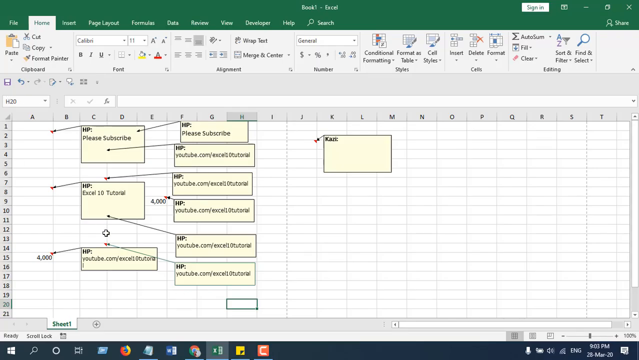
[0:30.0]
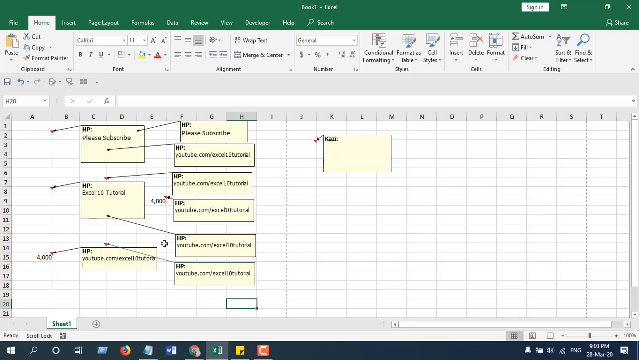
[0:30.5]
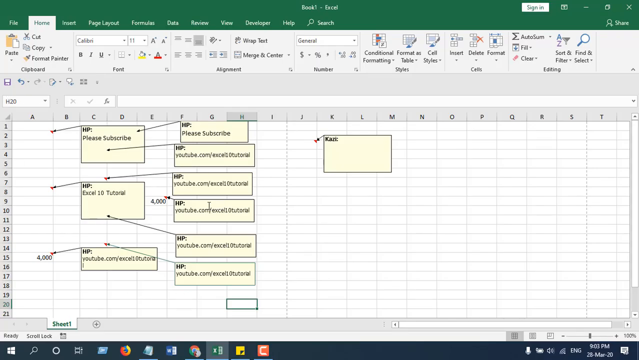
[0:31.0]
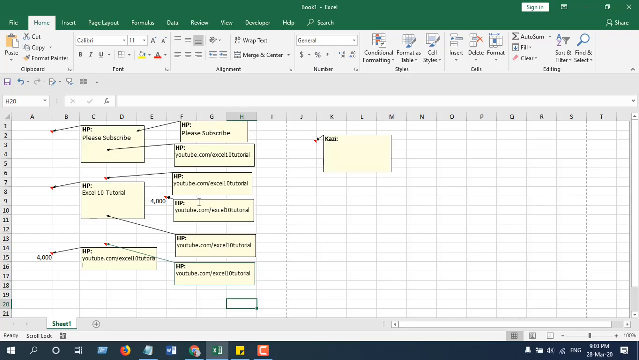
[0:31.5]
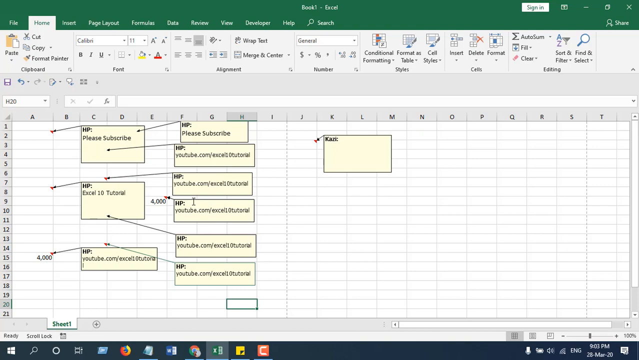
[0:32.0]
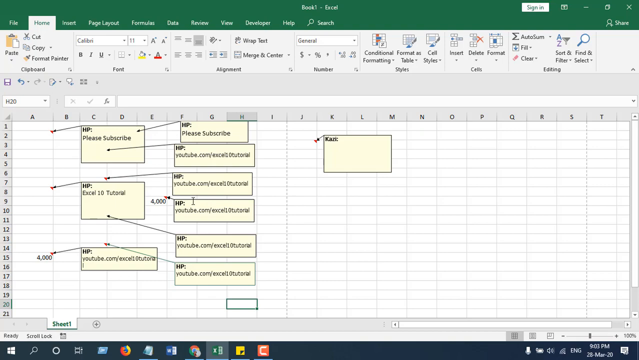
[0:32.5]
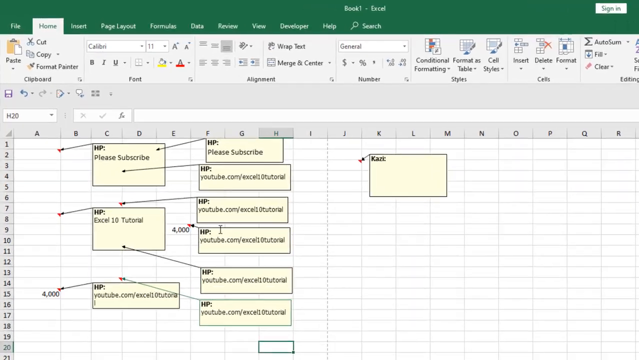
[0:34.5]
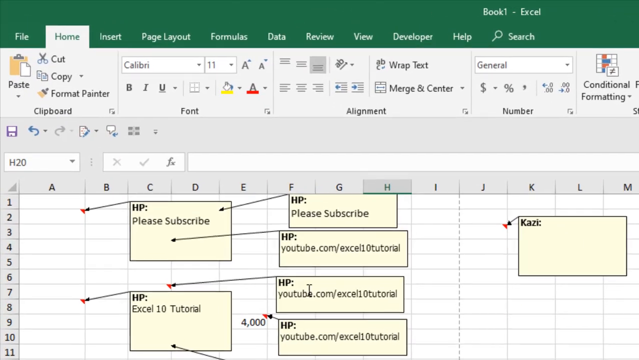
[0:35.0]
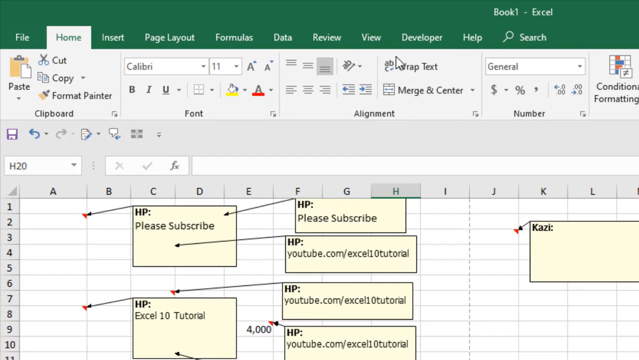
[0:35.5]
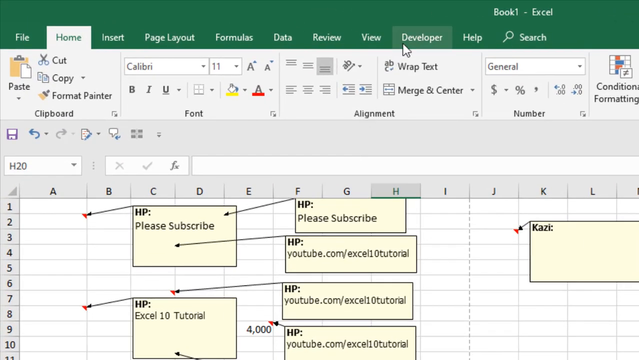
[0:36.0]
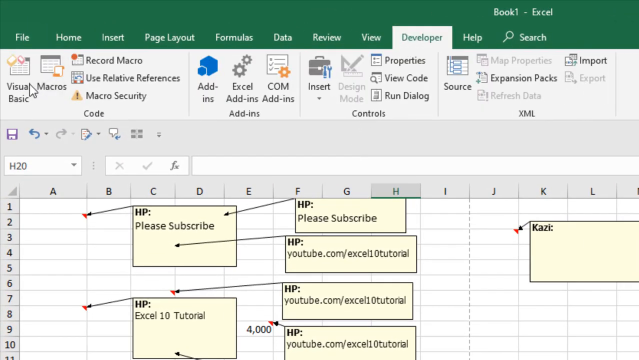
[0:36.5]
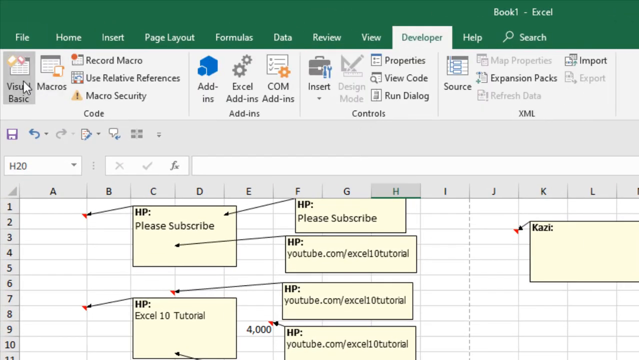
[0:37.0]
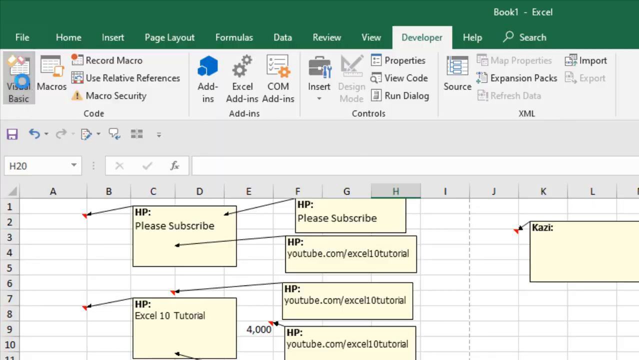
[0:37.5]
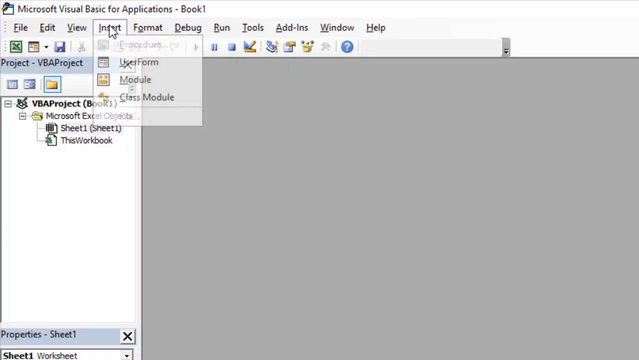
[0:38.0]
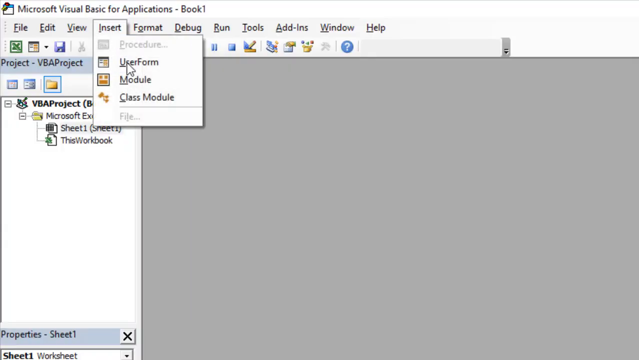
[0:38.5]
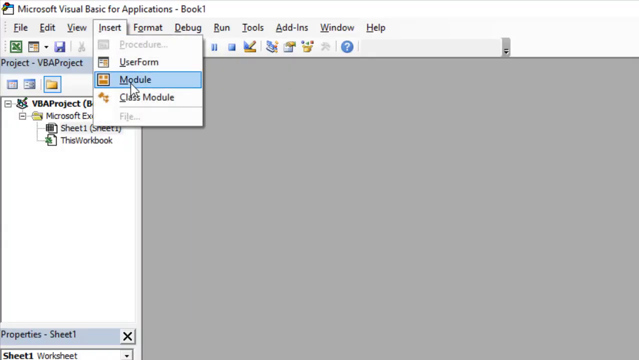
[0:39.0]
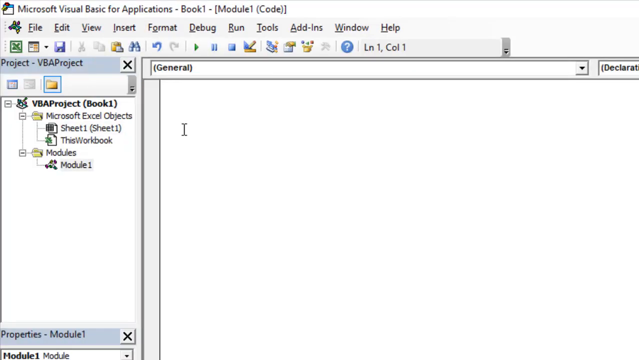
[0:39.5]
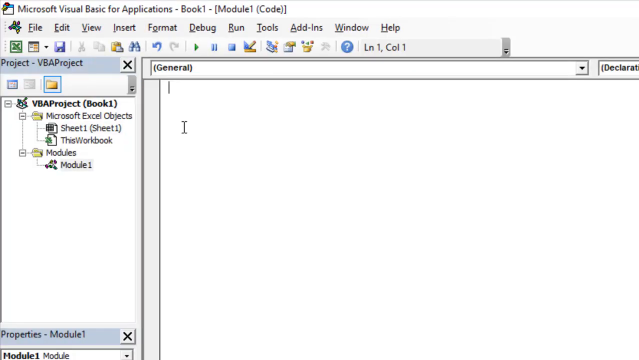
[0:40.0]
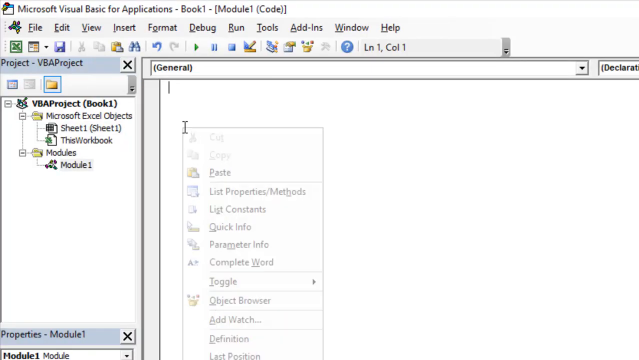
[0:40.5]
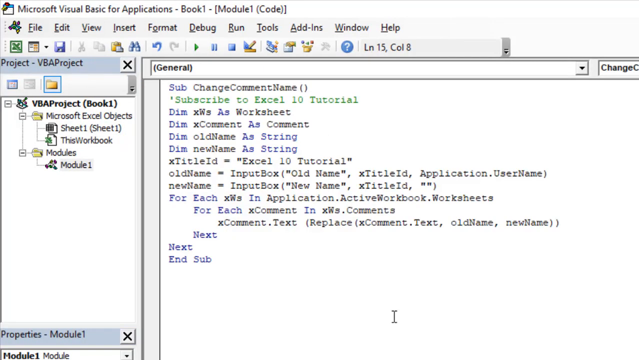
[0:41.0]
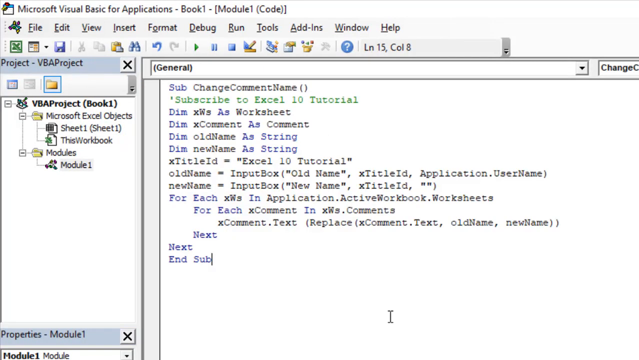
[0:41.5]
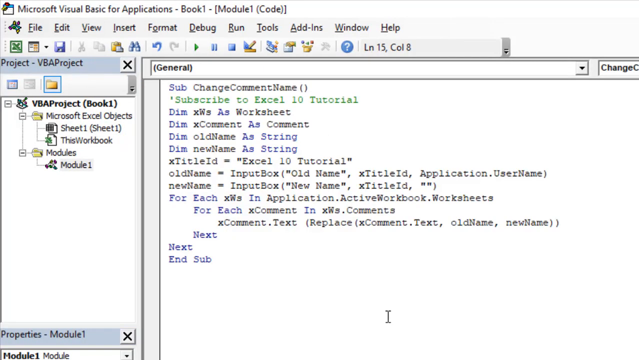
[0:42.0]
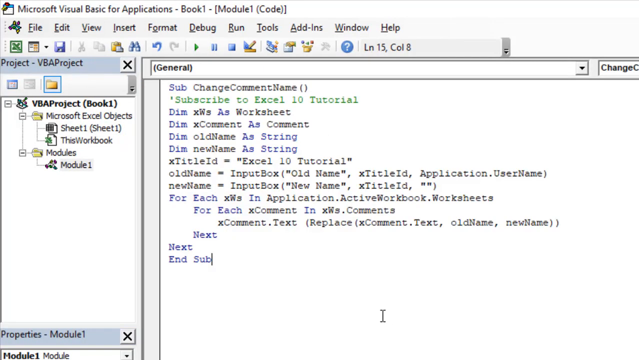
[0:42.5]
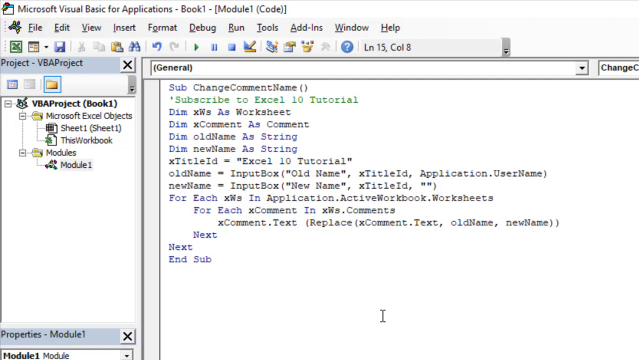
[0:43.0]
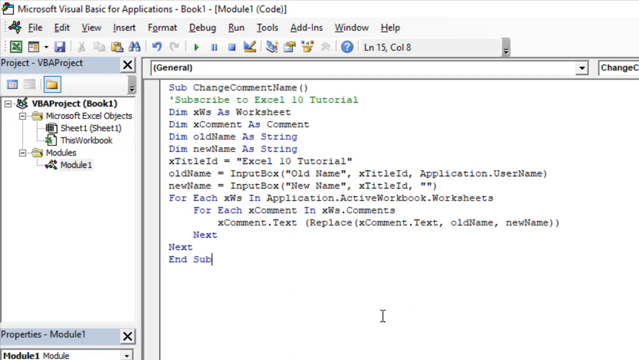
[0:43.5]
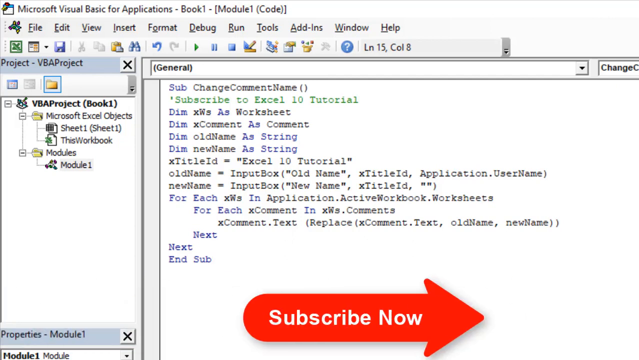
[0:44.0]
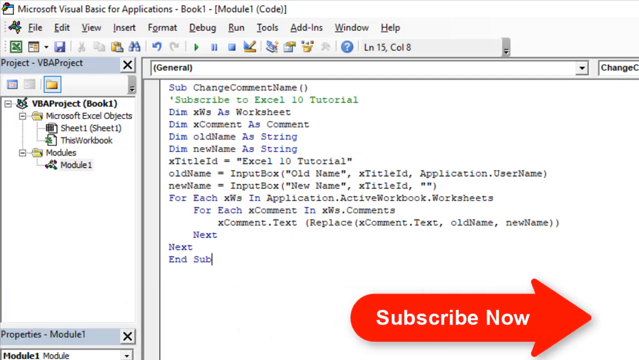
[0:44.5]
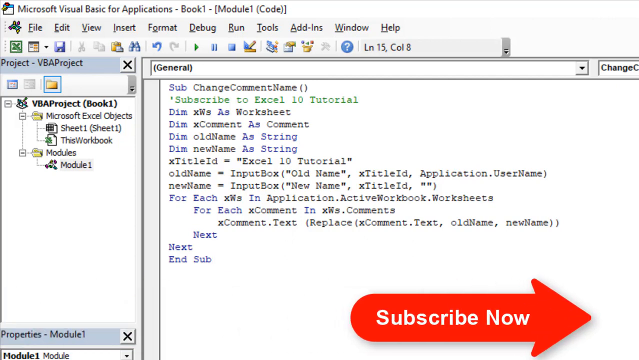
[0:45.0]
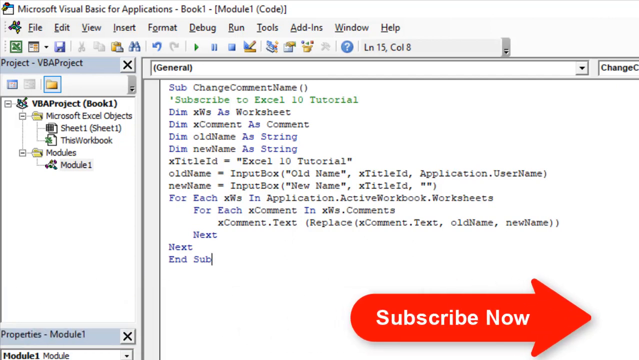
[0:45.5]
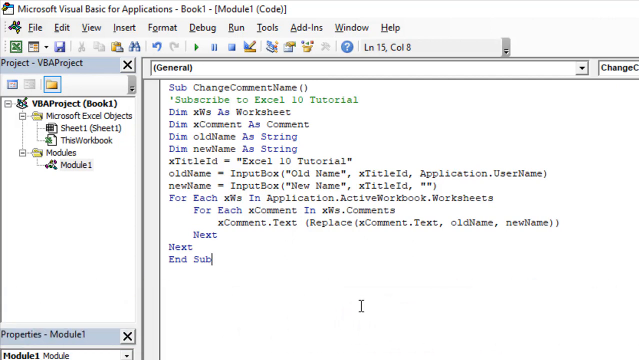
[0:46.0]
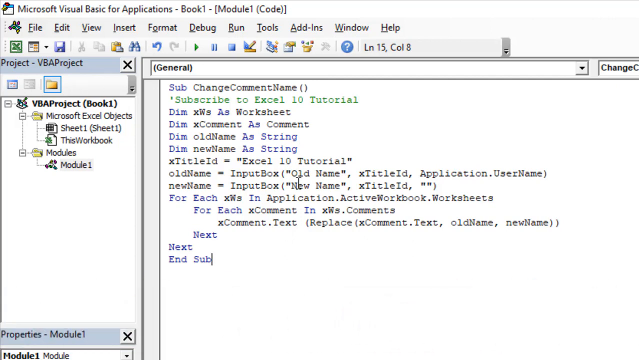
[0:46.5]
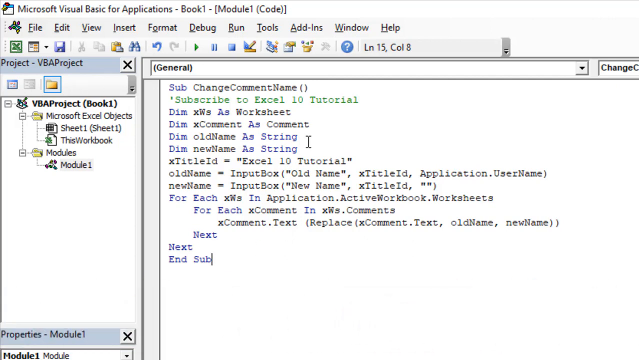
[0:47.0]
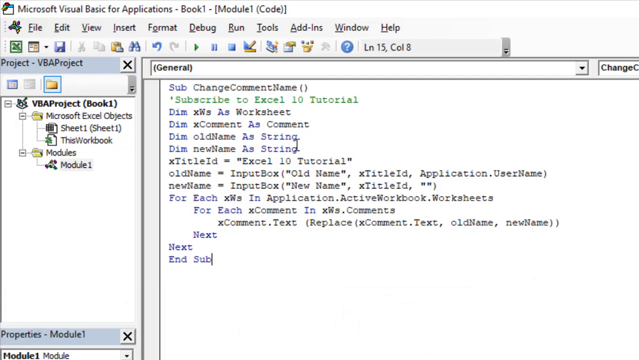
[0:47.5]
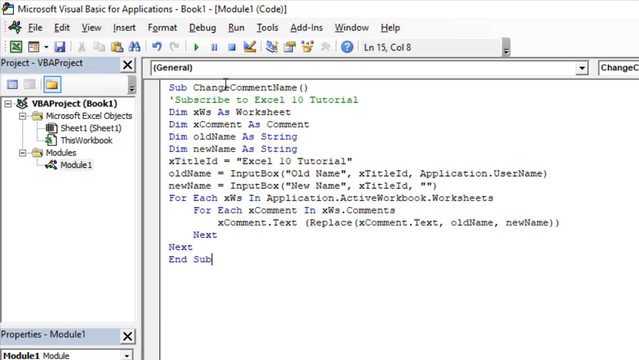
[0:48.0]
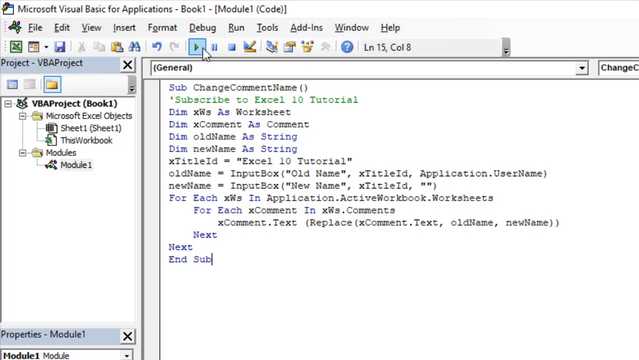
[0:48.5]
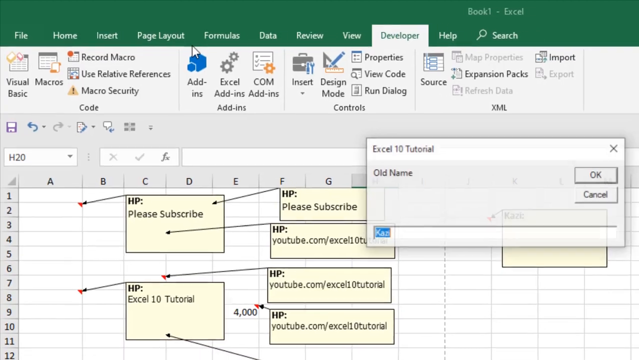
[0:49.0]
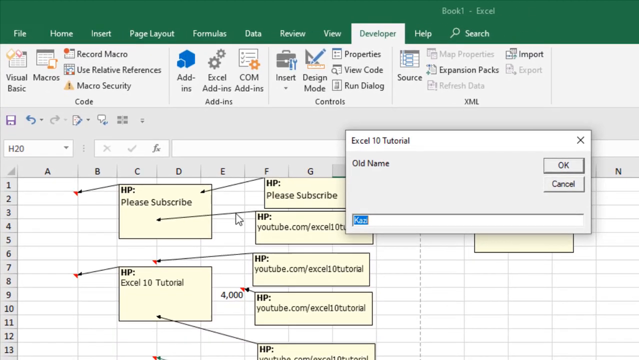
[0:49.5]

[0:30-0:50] The user works with the developer tools in Excel, apparently to create YouTube outros using code that is presented for copying and pasting. He goes to the Developer tab, then Visual Basic, then Insert Module, and inserts a piece of code into the module.